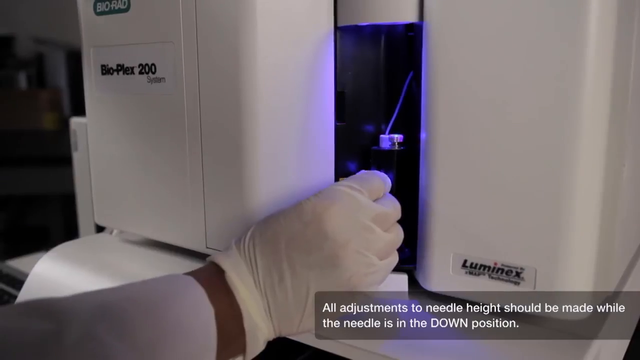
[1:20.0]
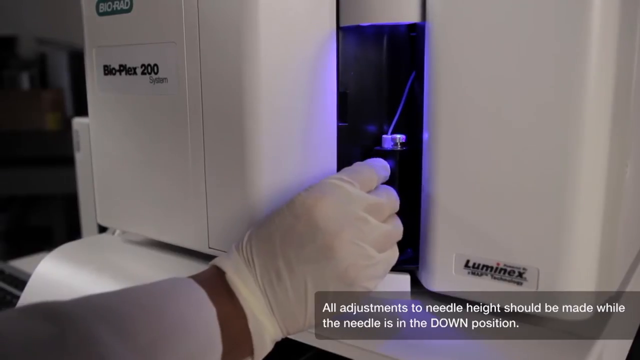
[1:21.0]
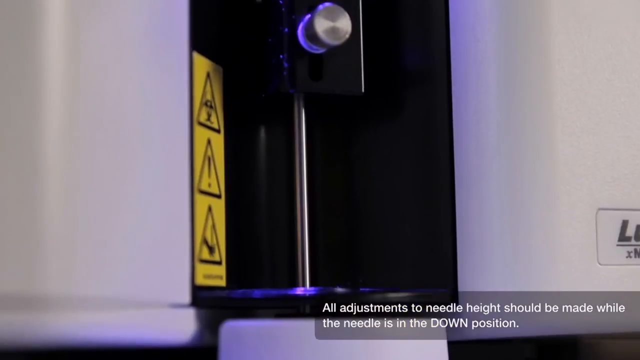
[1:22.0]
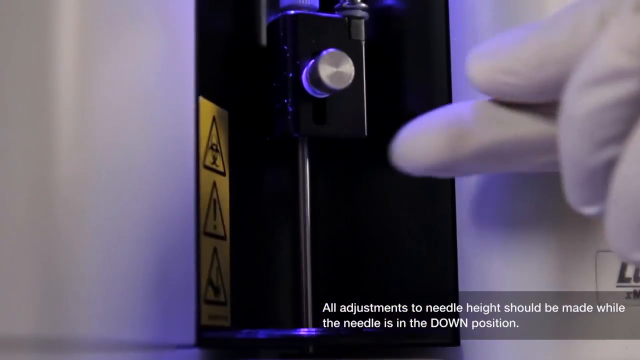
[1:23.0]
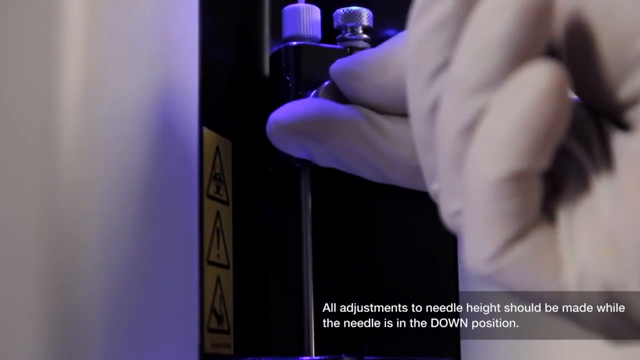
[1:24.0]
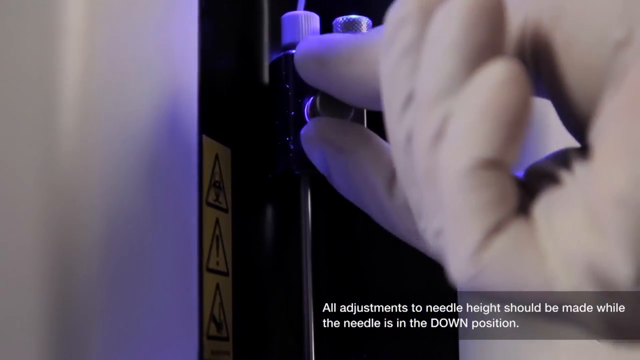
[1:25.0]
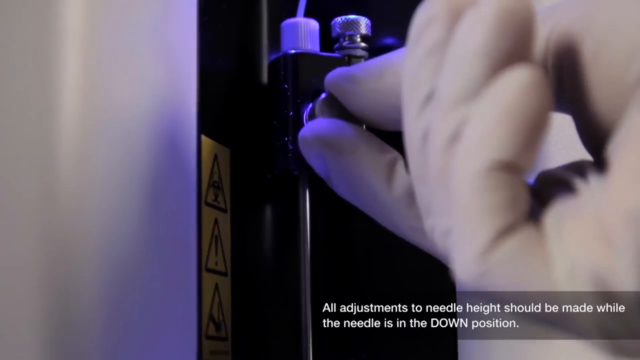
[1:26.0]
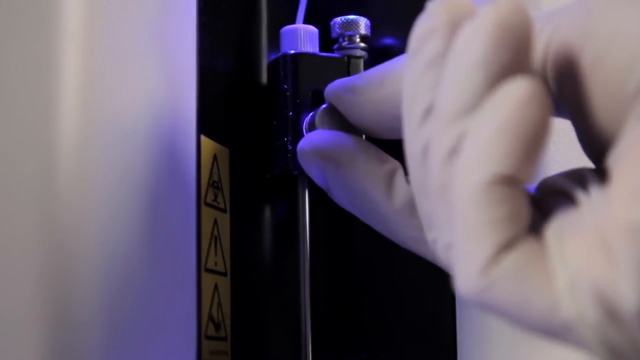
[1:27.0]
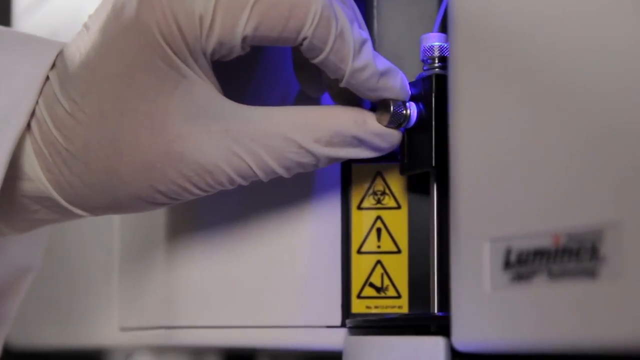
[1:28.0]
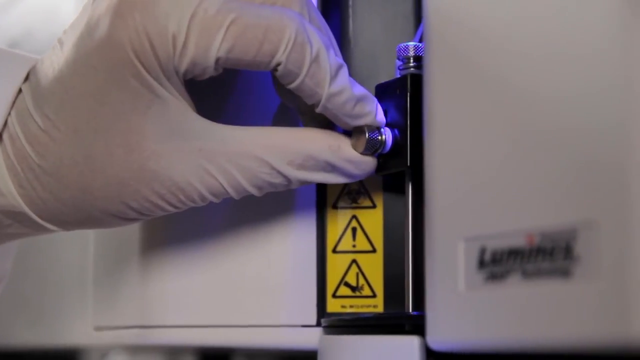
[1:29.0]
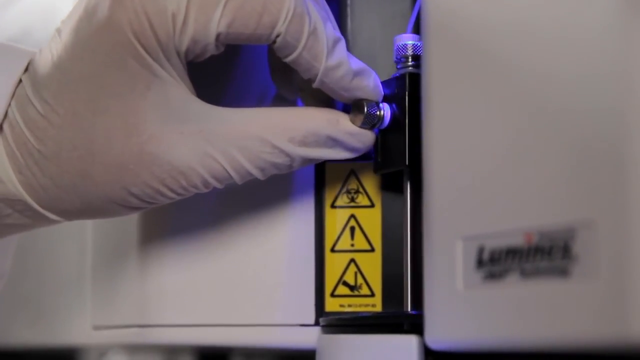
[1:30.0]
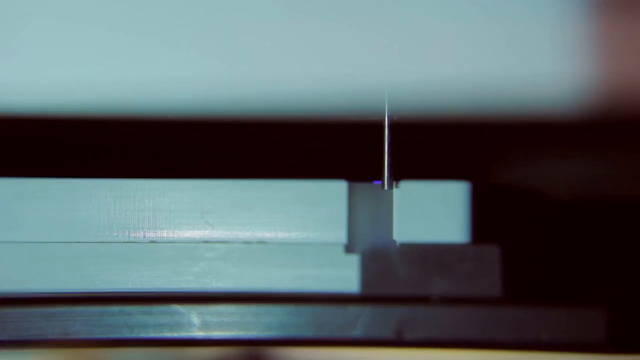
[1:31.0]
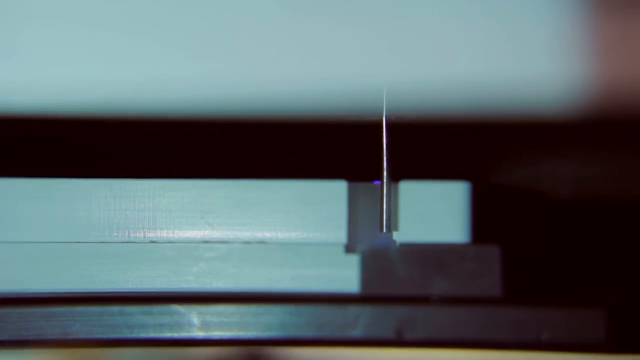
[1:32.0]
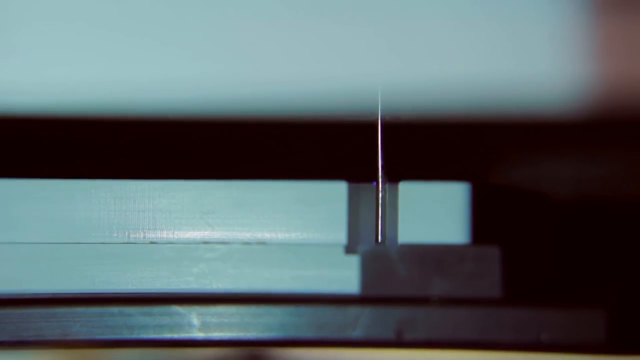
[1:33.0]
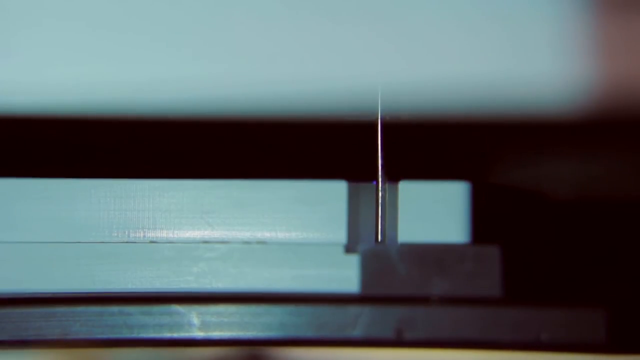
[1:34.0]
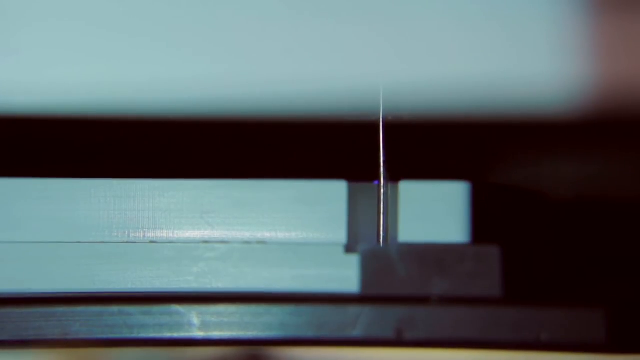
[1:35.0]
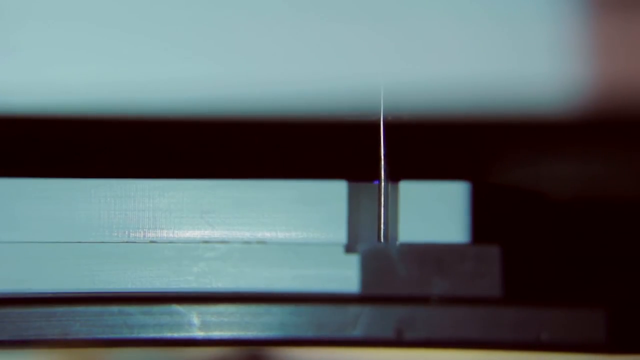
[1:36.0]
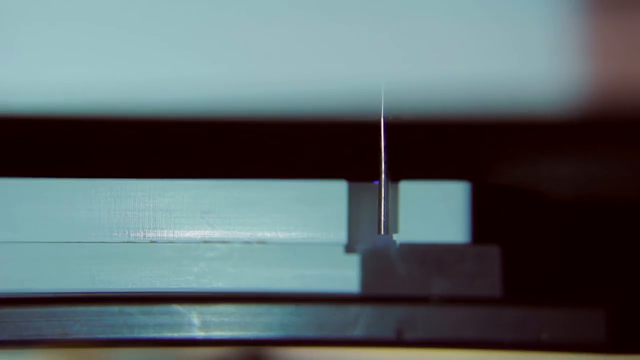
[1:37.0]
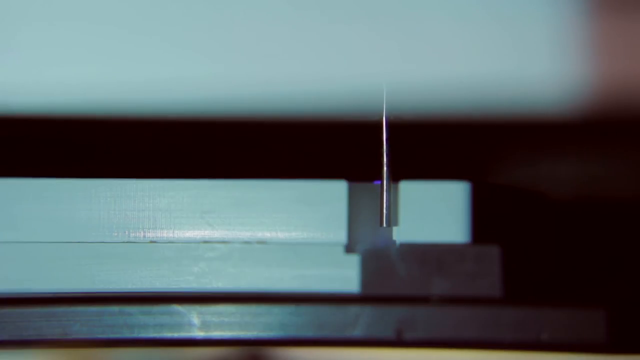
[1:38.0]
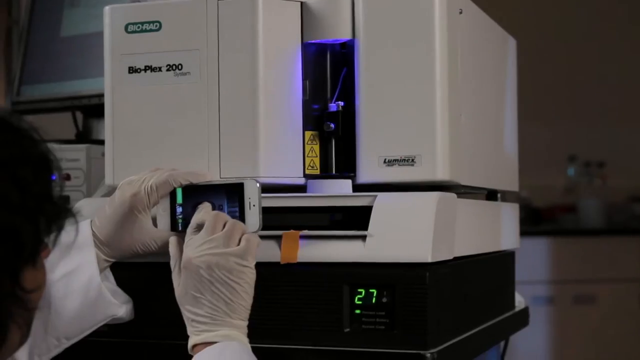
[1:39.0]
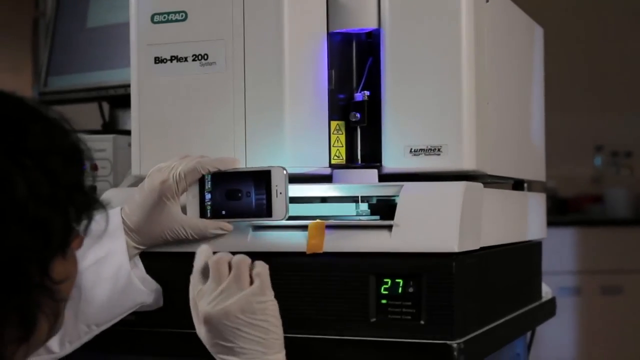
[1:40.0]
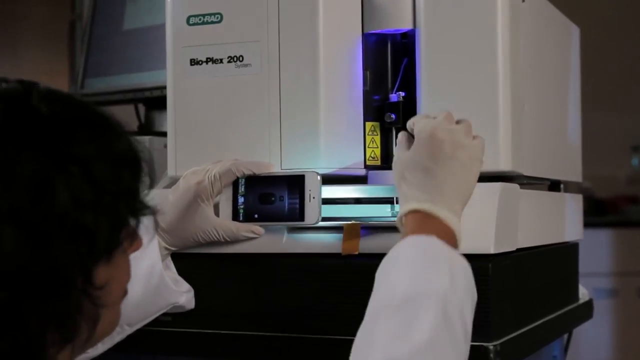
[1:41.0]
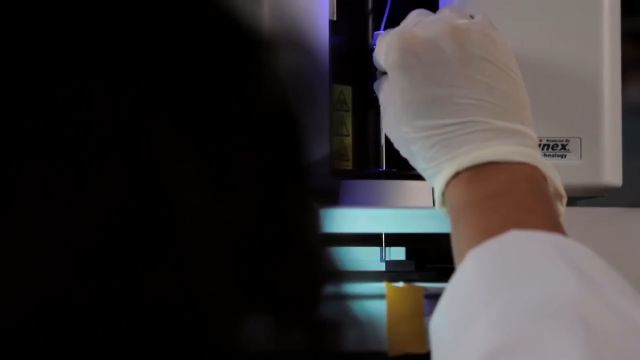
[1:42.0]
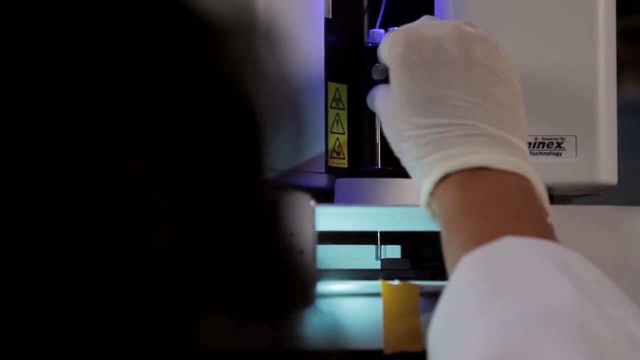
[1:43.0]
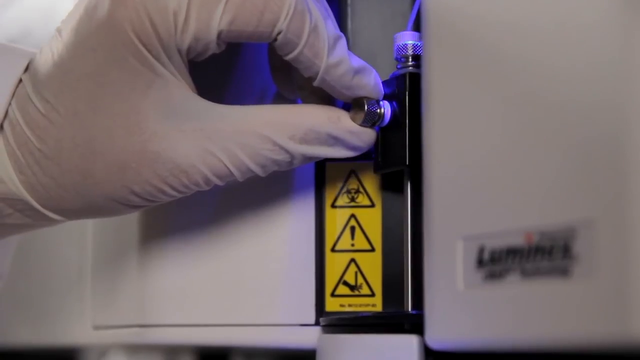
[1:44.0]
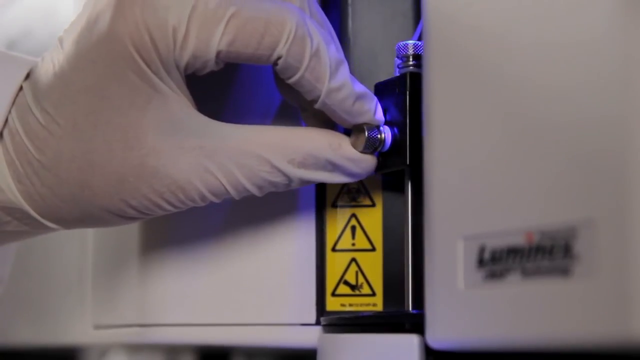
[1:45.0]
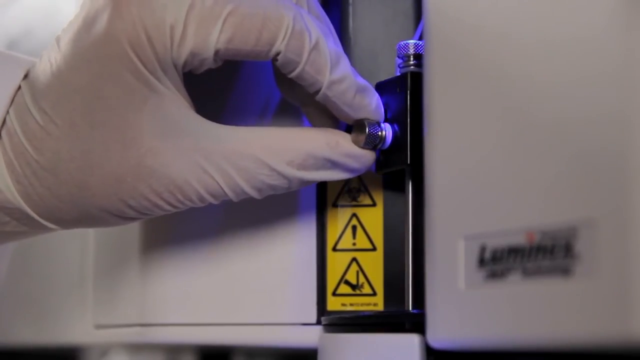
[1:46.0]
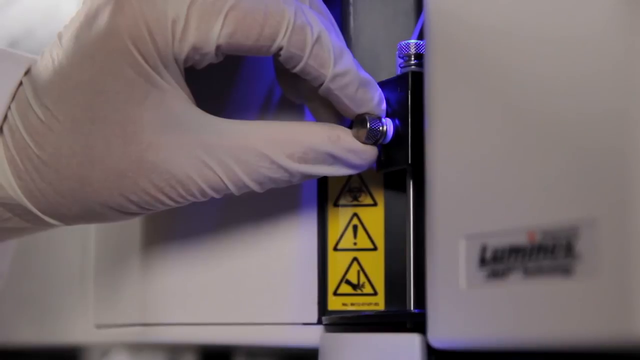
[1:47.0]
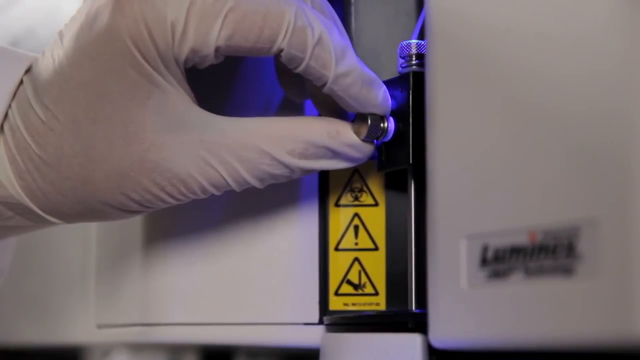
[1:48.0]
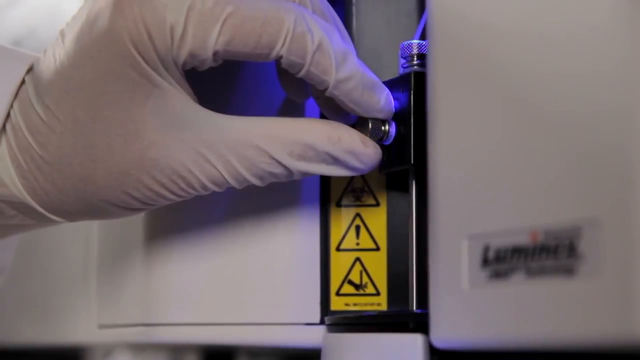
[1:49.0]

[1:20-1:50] A white machine is in a lab. A green label in the upper left of its front reads "Bio Rad," and beneath that black text reads "Bio-Plex 200." In the lower right of the machine, black text reads "Luminex." At the bottom right of the frame, a transparent textbox reads, in white text, "All adjustments to needle height should be made while the needle is in the DOWN position." A lab person in white gloves and a white lab coat reaches out from the left side of the frame with their right hand into a slot in the white machine, fingers bunched together. The angle changes to a close-up of the interior of the slot as the camera pans up slowly. The lab person's gloved right hand comes from the right side of the frame to twist a metallic piece at the top of the machine, rotating it clockwise with the thumb and pointer finger, then holding the piece, lifting it up and bringing it back down. The angle changes to the right of the hand as the lab person continues to manipulate the metallic piece, lifting it up and bringing it back down twice in succession. The video switches to a close-up of the metallic needle as it descends slowly and then rises back up very slowly. Next, the lab person, who is wearing glasses, holds up a phone horizontally in their left hand while facing the front of the white machine, using the phone's light to illuminate the inside of the slot where the metallic needle and the white plastic object are. The lab person reaches up and to the right with the gloved right hand, pinches the metallic piece in the slot with the pointer finger and thumb, twists it clockwise, releases it and pulls the hand back. The video switches to a close-up of the lab person's gloved hand around the metallic piece as they bring it down, then slightly up, before twisting it clockwise with the pointer finger and thumb of their left hand.